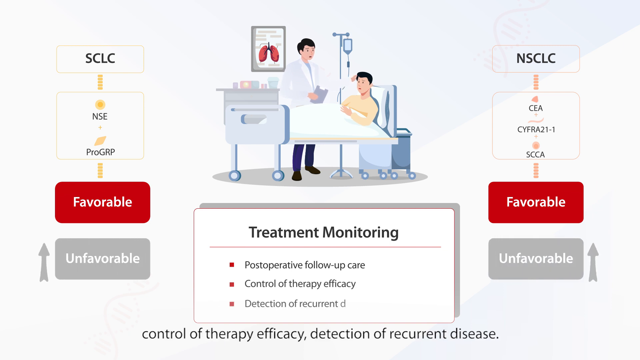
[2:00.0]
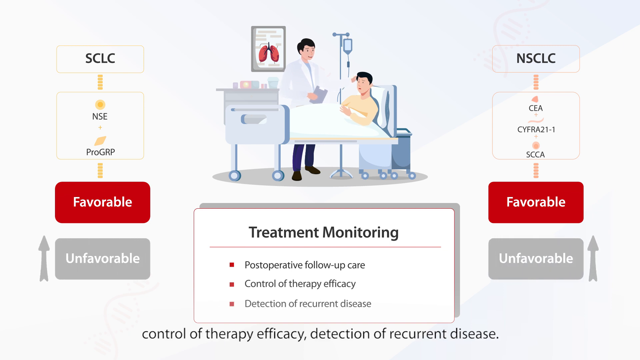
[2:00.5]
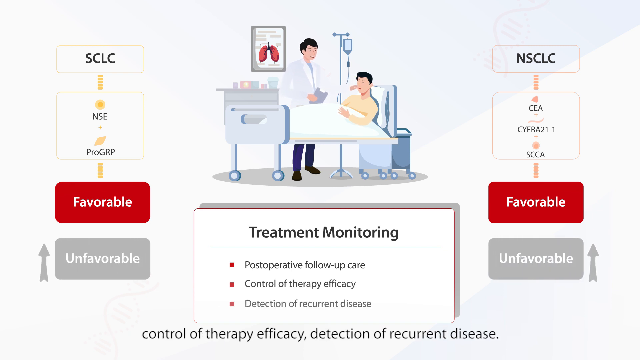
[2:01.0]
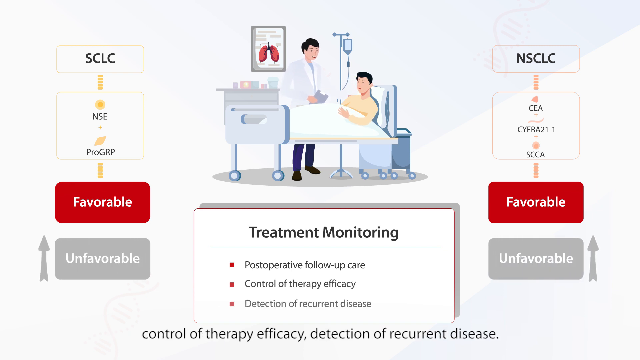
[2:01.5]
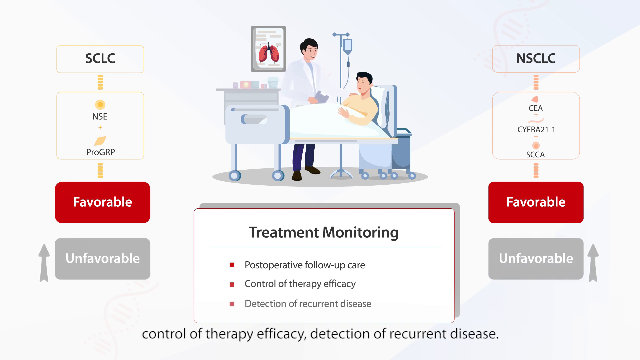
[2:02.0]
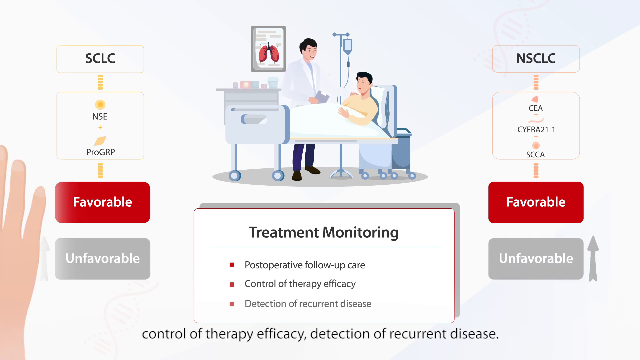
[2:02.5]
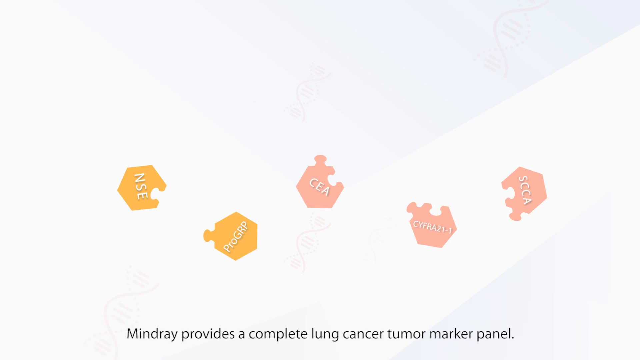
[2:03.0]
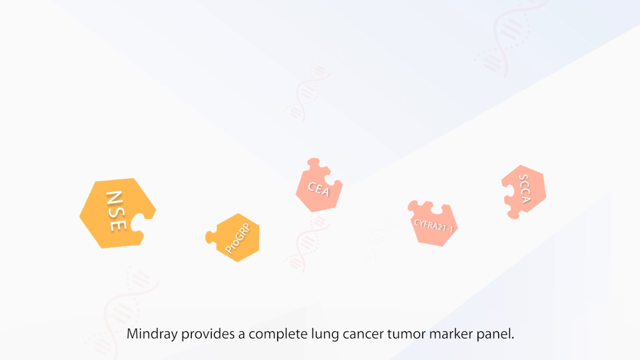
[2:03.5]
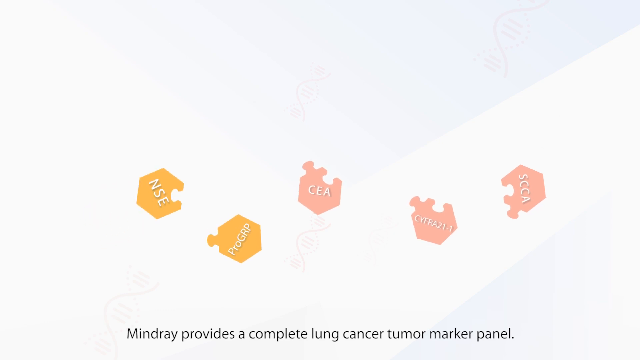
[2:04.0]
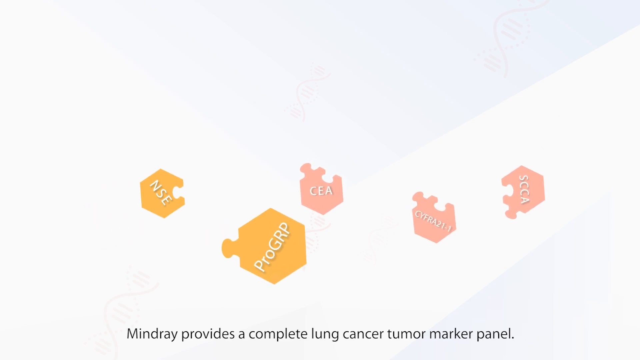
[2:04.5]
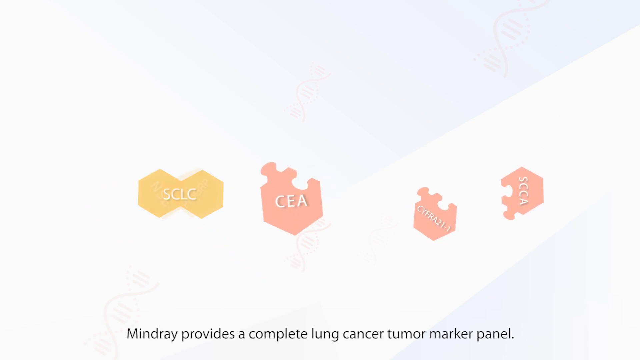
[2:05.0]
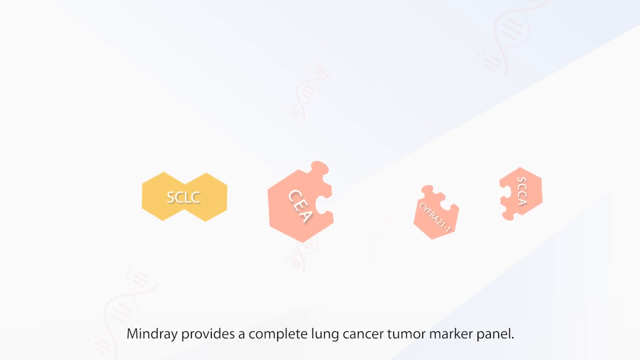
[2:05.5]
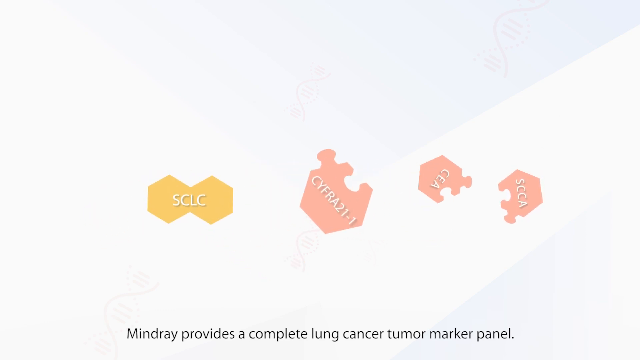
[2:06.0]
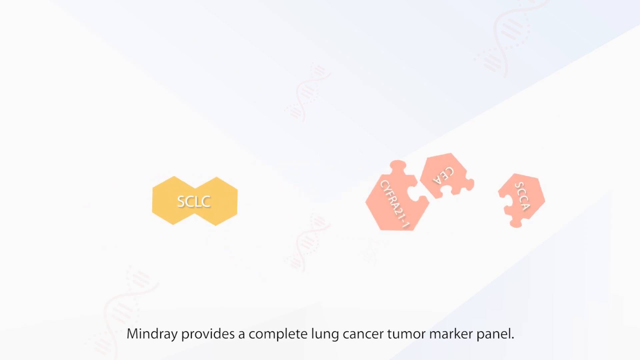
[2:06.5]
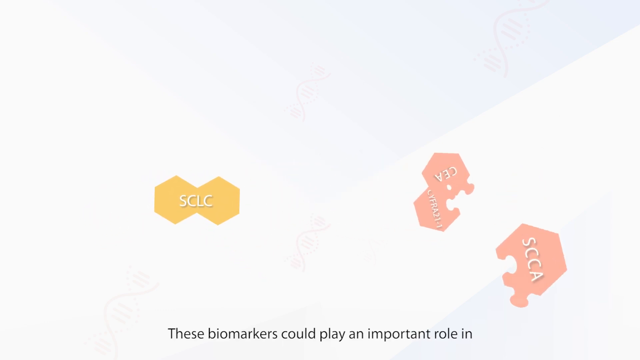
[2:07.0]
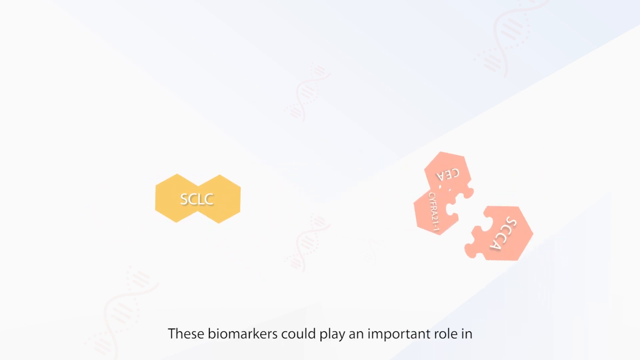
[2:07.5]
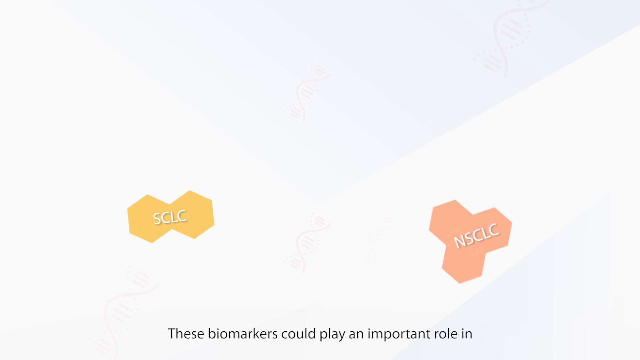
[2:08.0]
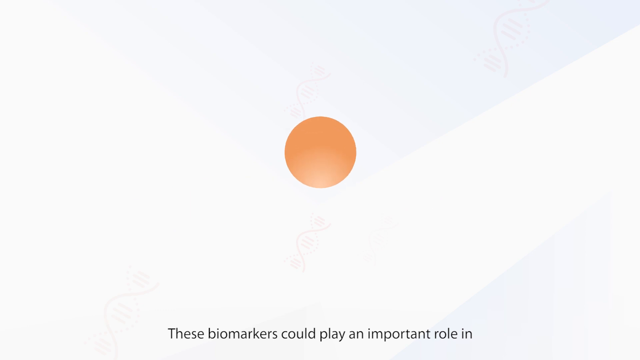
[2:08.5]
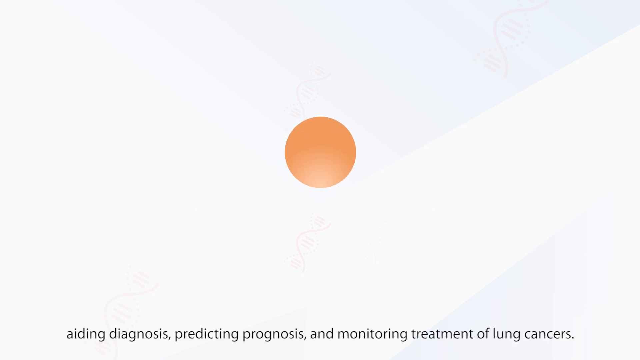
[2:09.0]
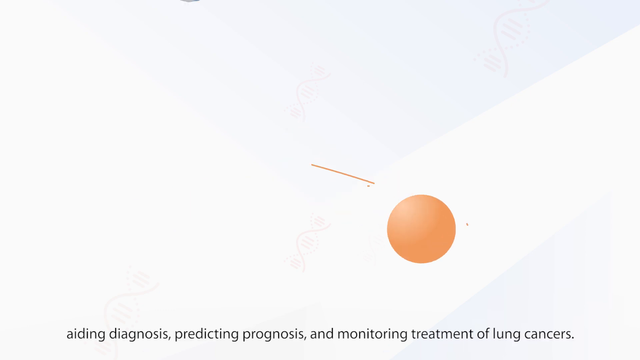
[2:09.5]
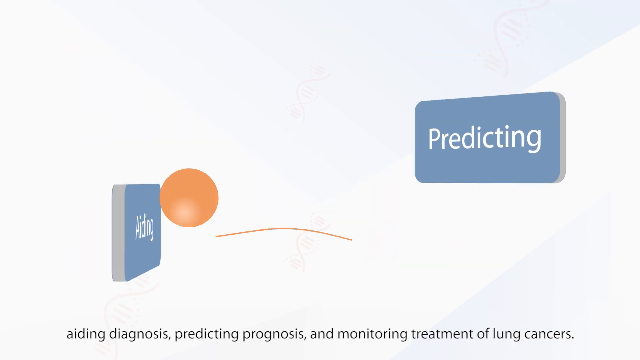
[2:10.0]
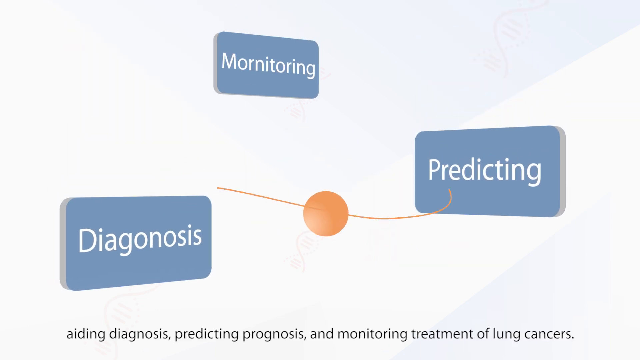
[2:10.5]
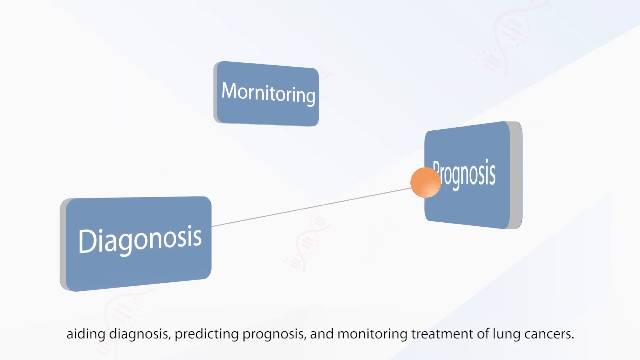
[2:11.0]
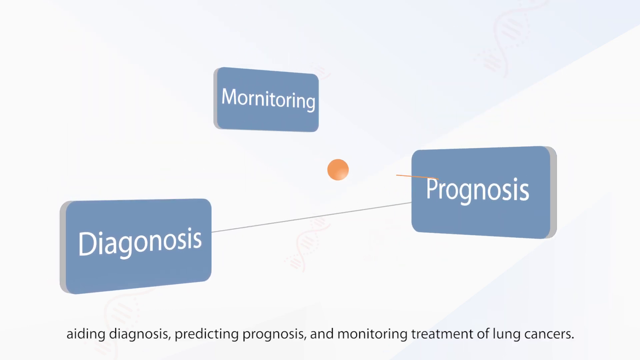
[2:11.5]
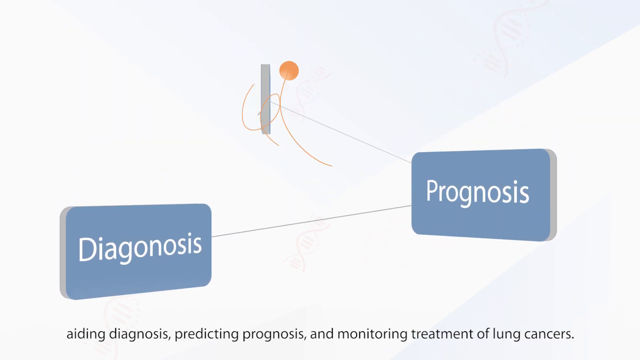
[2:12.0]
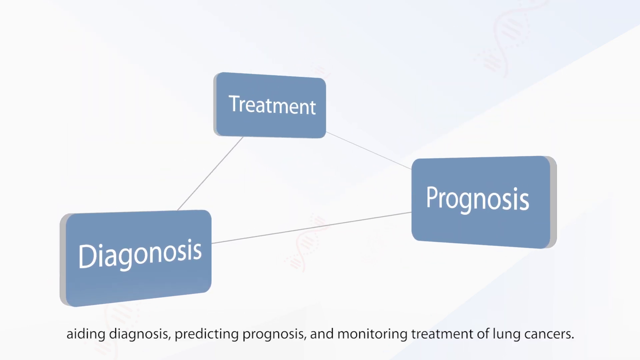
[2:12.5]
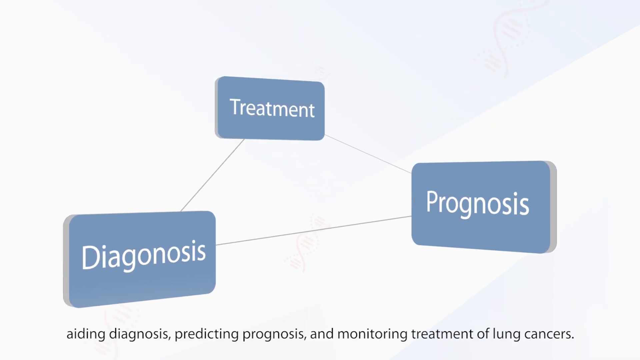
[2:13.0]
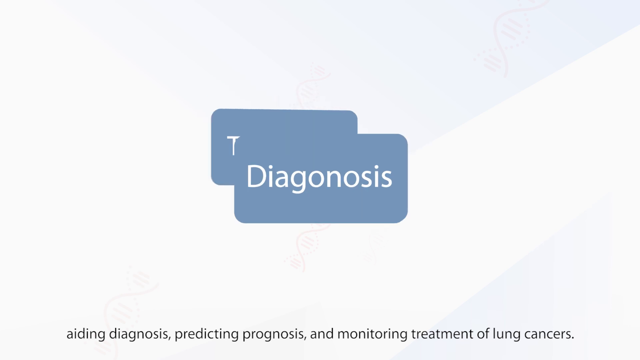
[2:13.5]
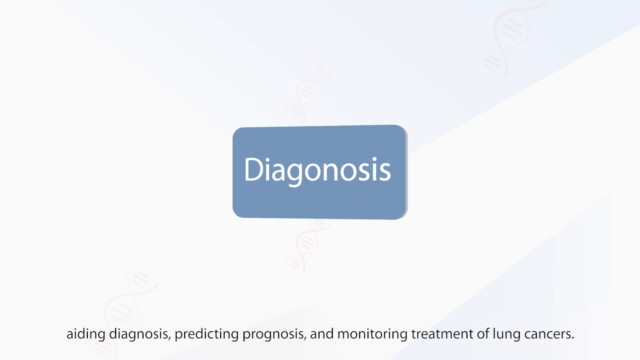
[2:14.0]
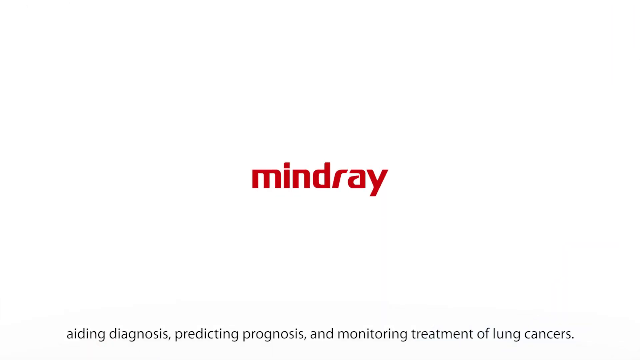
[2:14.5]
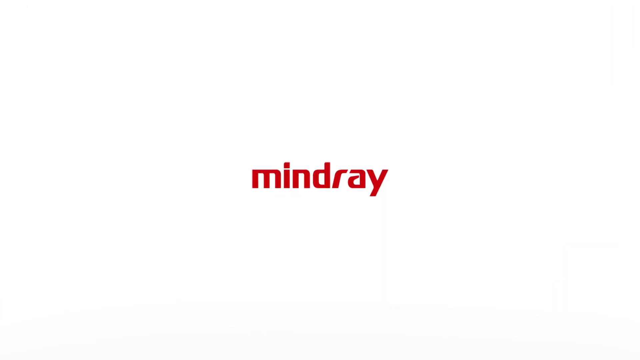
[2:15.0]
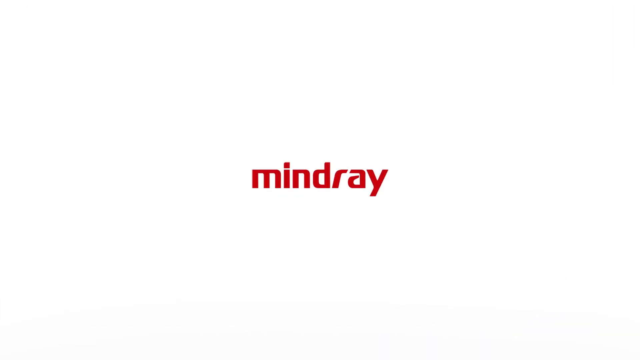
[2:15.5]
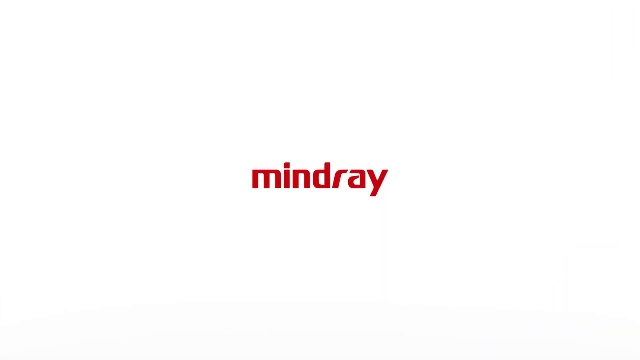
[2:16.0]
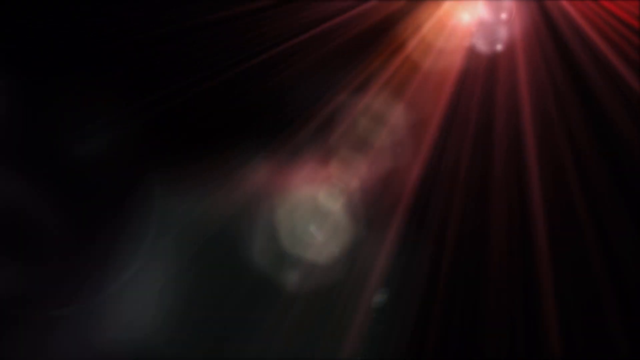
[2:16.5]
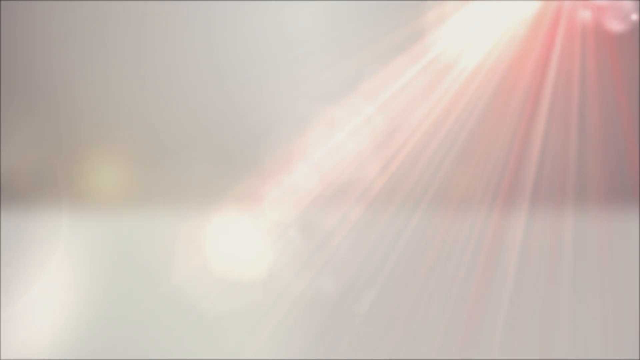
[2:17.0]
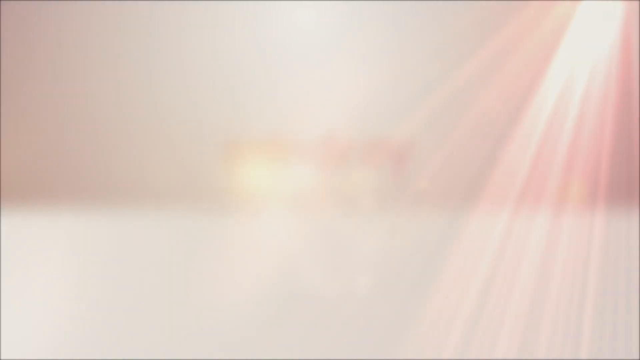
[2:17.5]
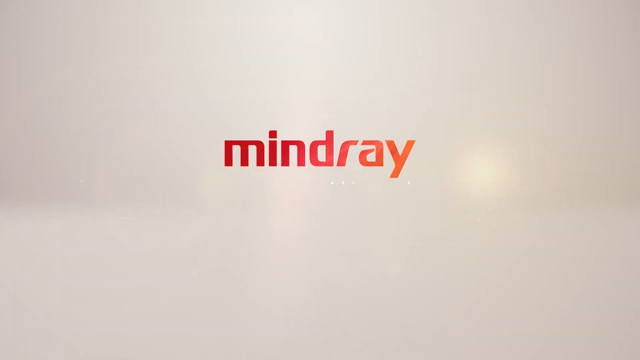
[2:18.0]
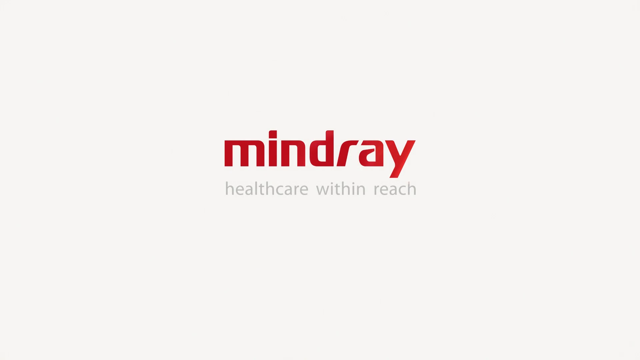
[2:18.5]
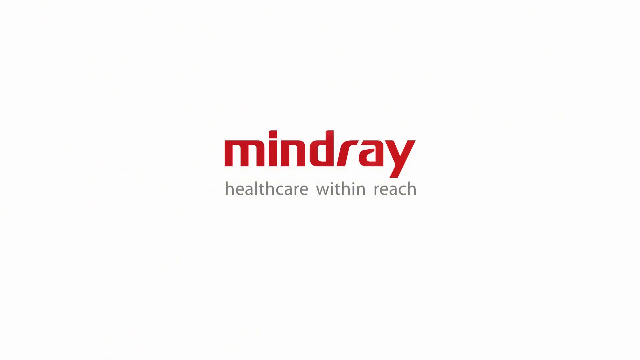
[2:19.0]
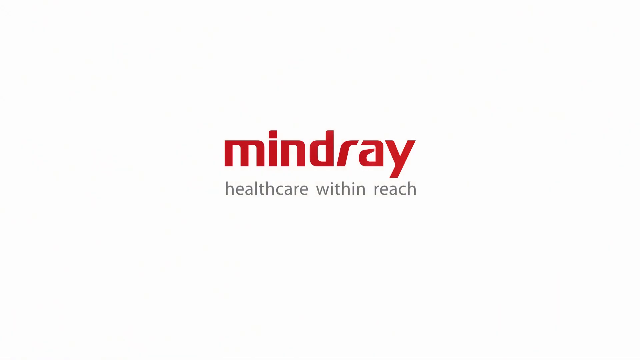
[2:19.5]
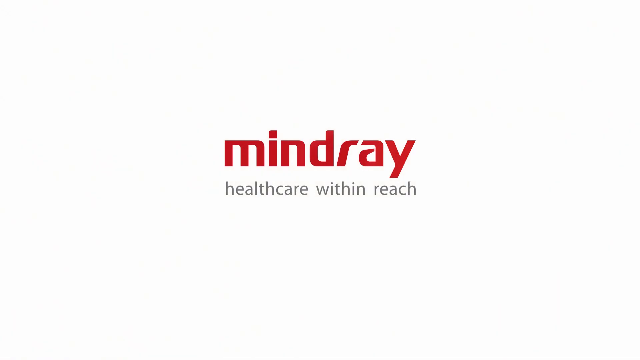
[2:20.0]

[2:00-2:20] A cartoon image shows a patient lying in a bed on a drip, with a doctor standing over him in the centre looking at him; the patient looks to the left, off the side of the screen. A text box appears underneath reading "treatment monitoring, post-operative follow-up care, control of therapy efficiency and direction of recurrent disease". On the left is a chart reading "SCLC" at the top, with "NSC" and "Pro-GRP" in a box below, each with an image of that marker, then the word "favourable" in a red box and "unfavourable" below it in a grey box, with a grey arrow pointing up to the left of the infographic. On the far right is a box reading "NSCLC", with "CEA", "CYFRA21-1" and "SCCA" below, each with its image, then a red box with "favourable" and a grey box with "unfavourable" below it, with a grey arrow pointing up. A cartoon hand comes across and swipes the image away, leaving the screen blank. Hexagons appear: two yellow ones reading "NSC" and "Pro-GRP", and three pink ones reading "CEA", "CYFRA21-1" and "SCCA". Each is like a jigsaw piece, with a piece taken out and a jigsaw end attached. The Pro-GRP hexagon pops out towards the viewer, moves left and connects to the NSC hexagon, and "SCLC" appears over them. The other three hexagons come together in a circle with "NSCLC" appearing on top, then connect and change into an orange circle, which goes to the centre of the screen. Three boxes appear: "aiding" at the bottom left, "predicting" at the central right, and "monitoring" at the top centre. The orange ball bounces from the aiding box, which changes to "diagnosis", to predicting, which changes to "Prognosis", and then to Monitoring, which changes to "Treatment". The image then changes to the logo "MindRay Healthcare within reach".